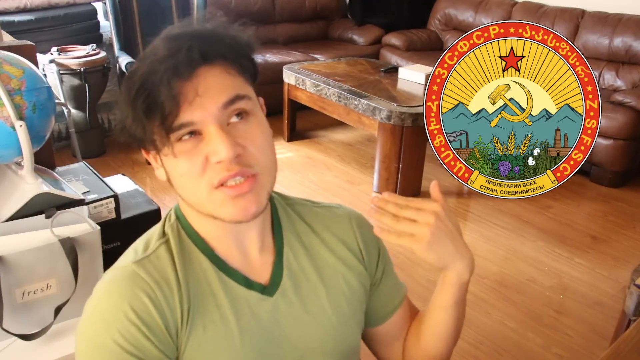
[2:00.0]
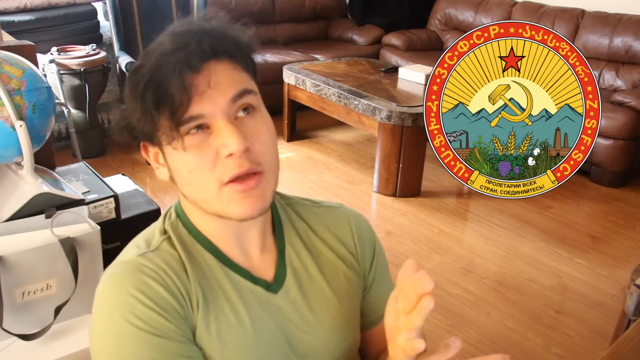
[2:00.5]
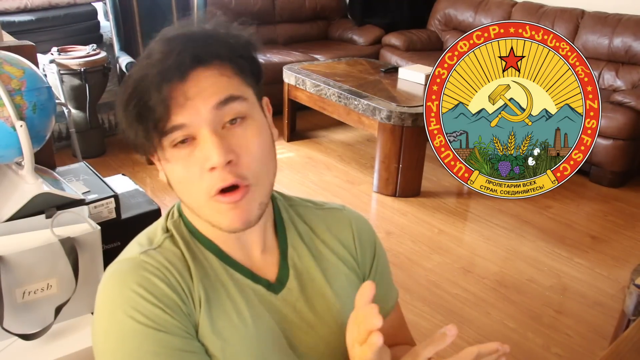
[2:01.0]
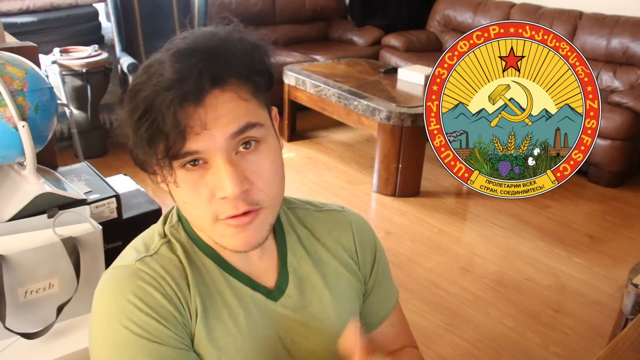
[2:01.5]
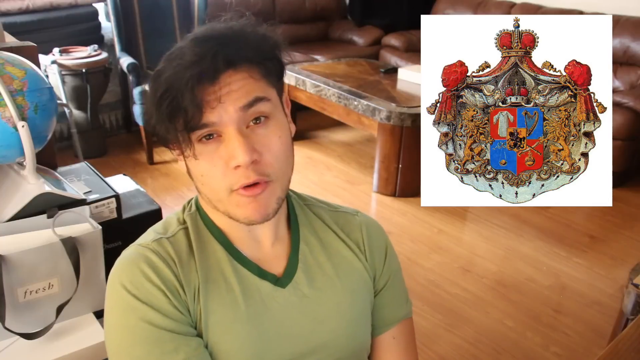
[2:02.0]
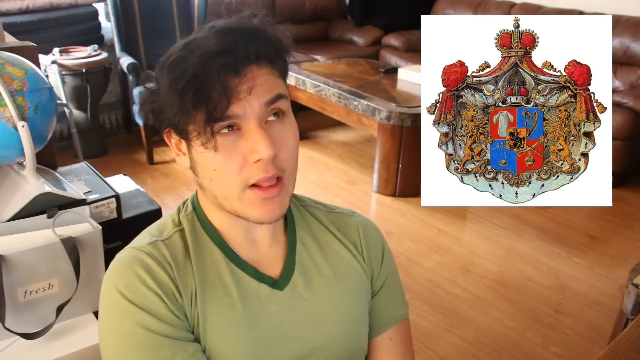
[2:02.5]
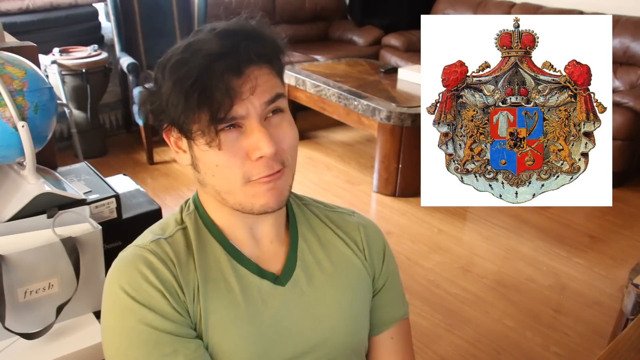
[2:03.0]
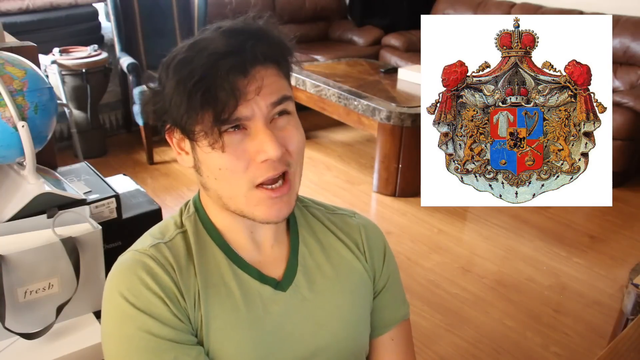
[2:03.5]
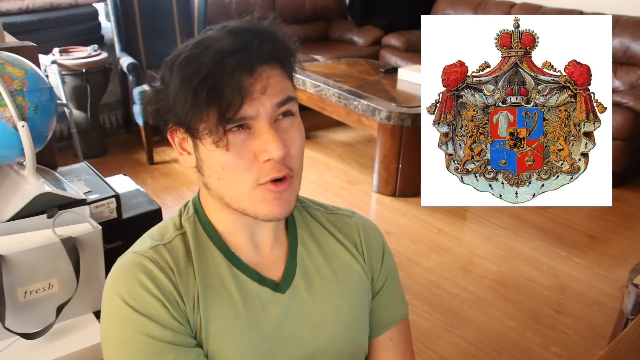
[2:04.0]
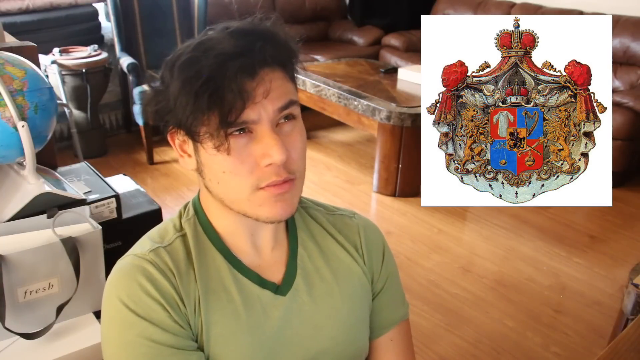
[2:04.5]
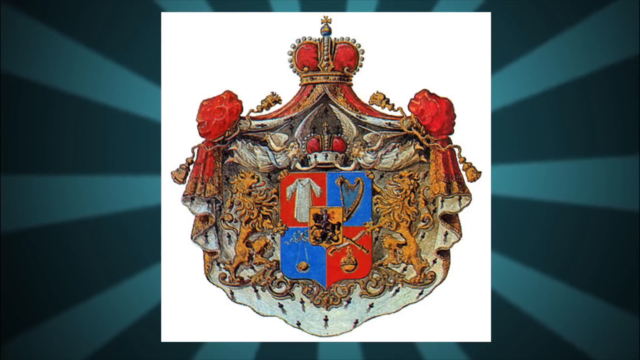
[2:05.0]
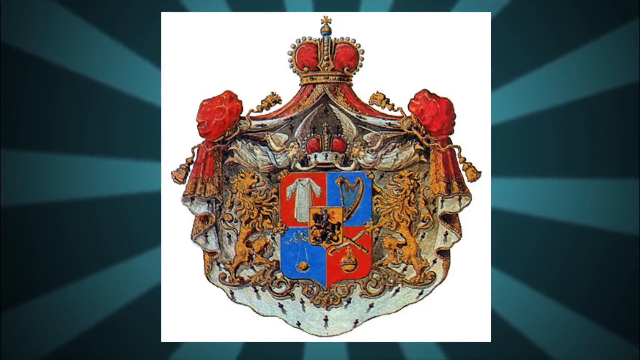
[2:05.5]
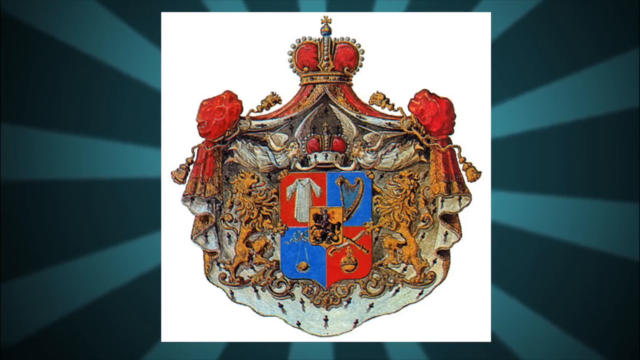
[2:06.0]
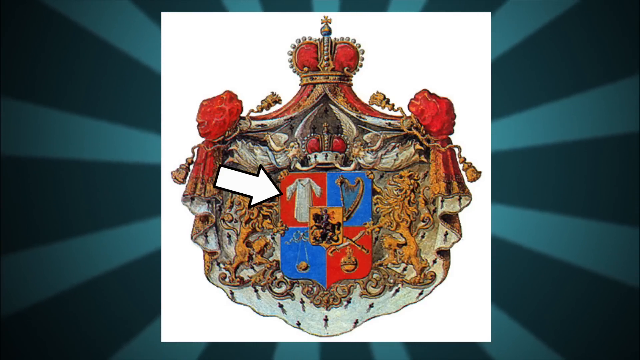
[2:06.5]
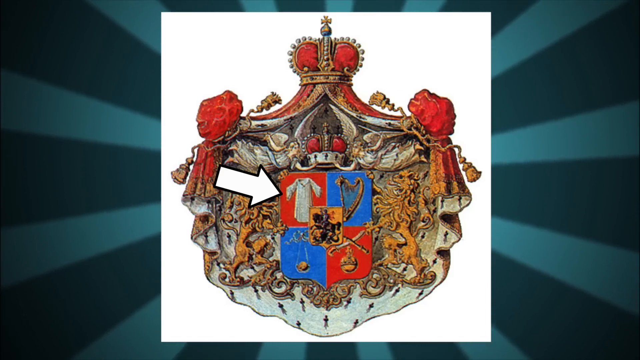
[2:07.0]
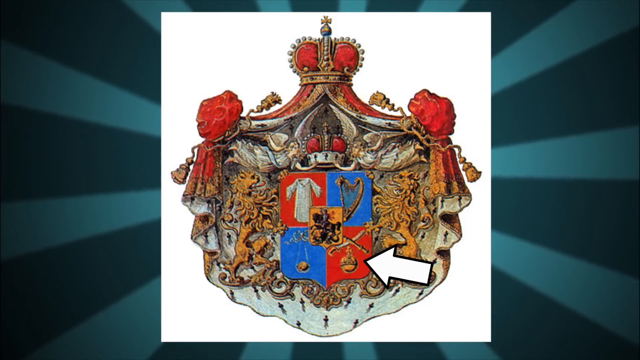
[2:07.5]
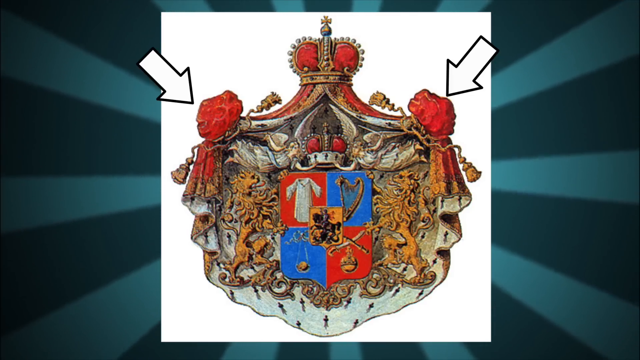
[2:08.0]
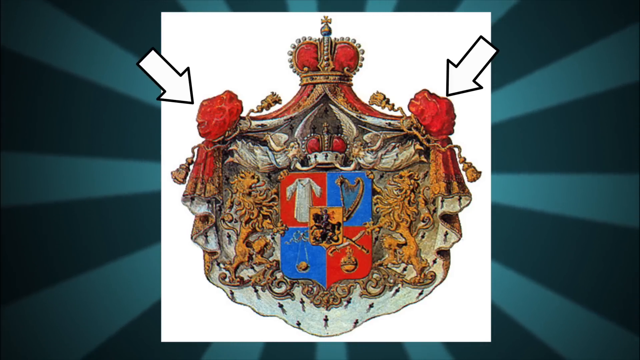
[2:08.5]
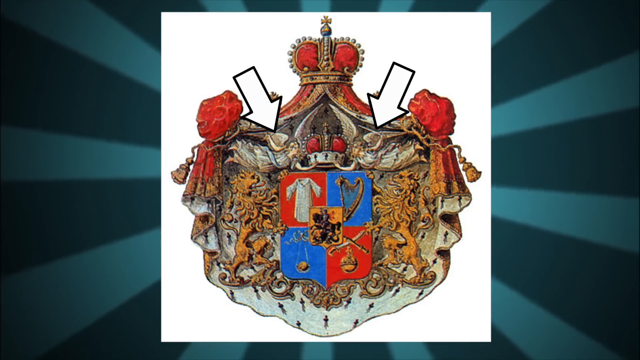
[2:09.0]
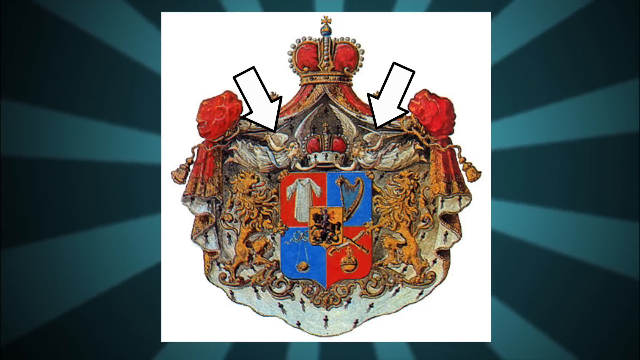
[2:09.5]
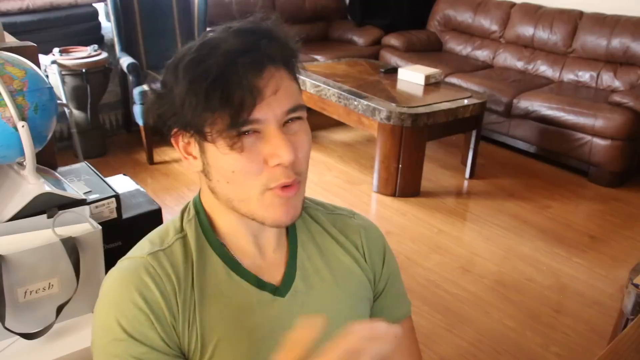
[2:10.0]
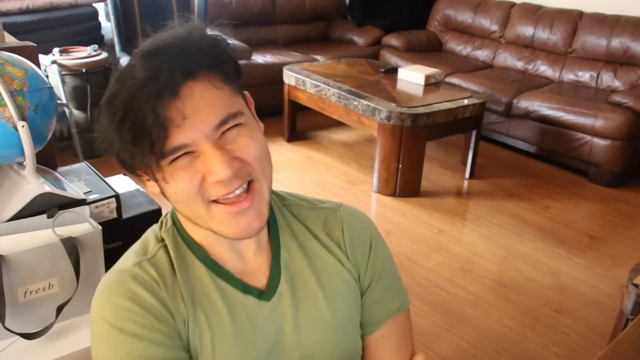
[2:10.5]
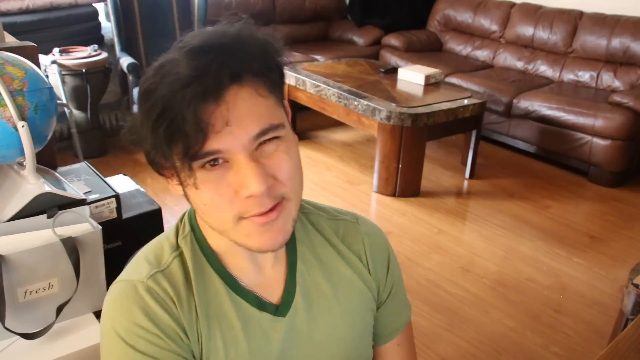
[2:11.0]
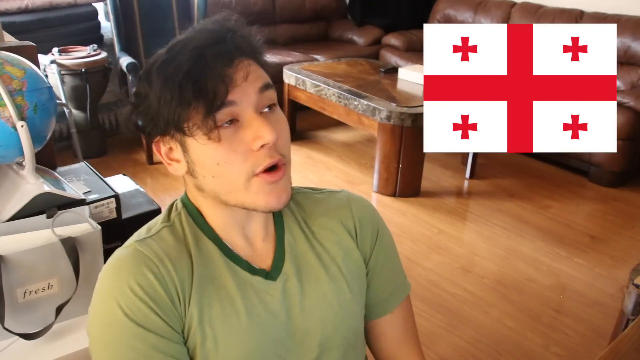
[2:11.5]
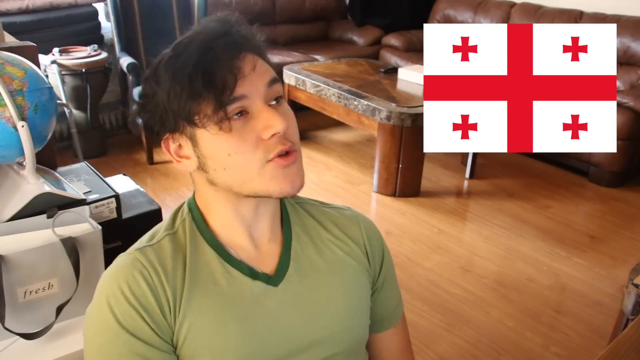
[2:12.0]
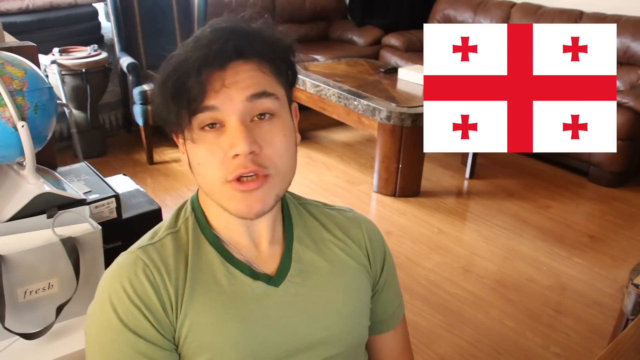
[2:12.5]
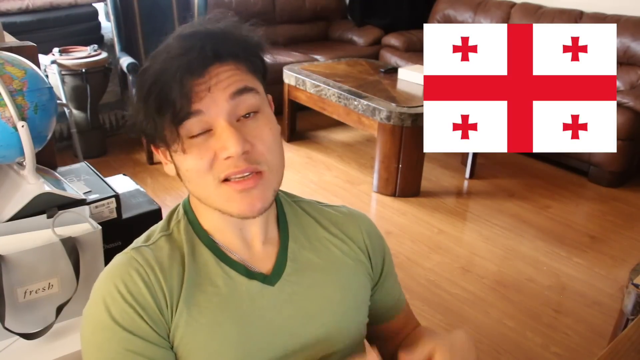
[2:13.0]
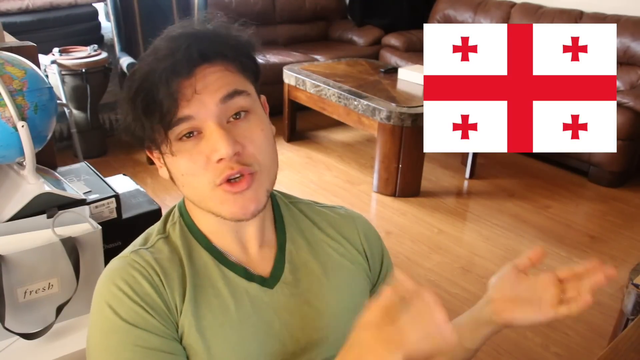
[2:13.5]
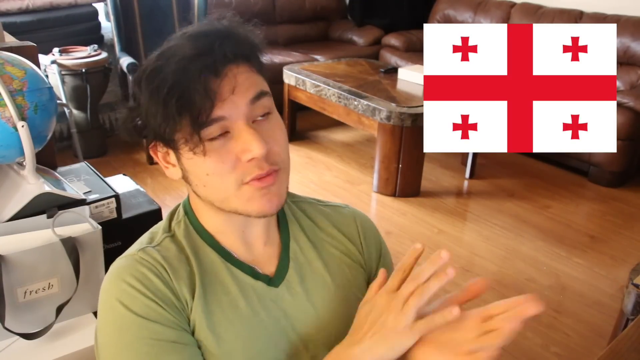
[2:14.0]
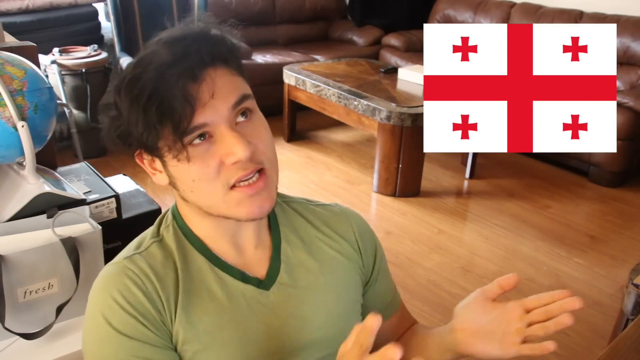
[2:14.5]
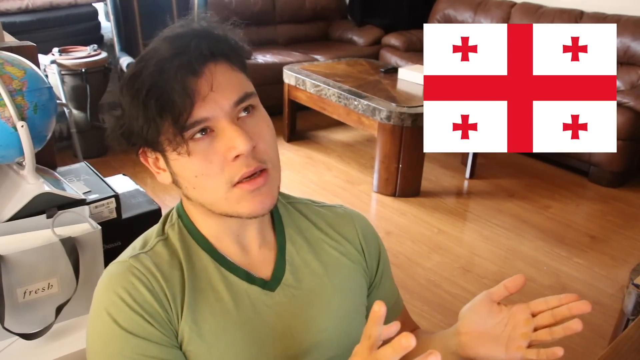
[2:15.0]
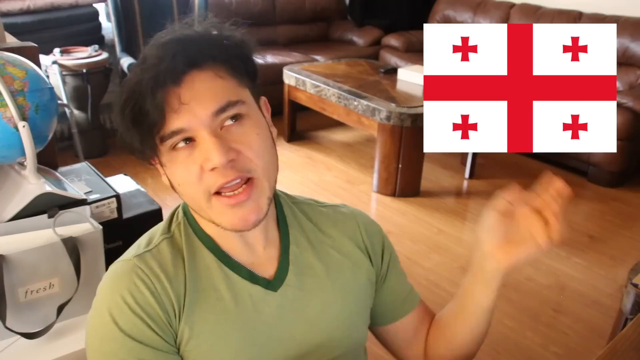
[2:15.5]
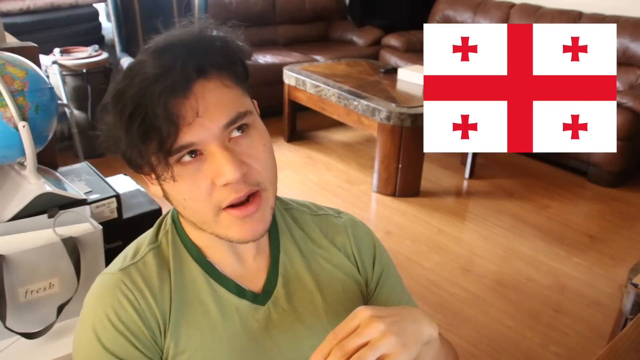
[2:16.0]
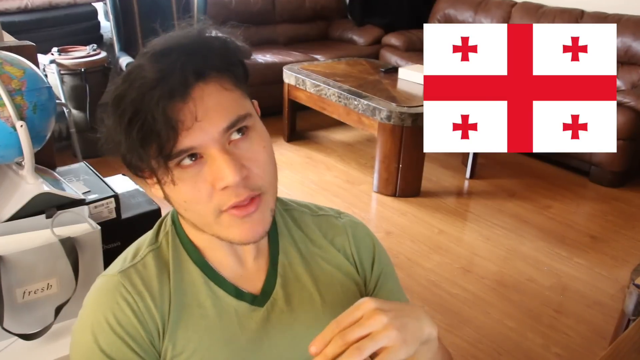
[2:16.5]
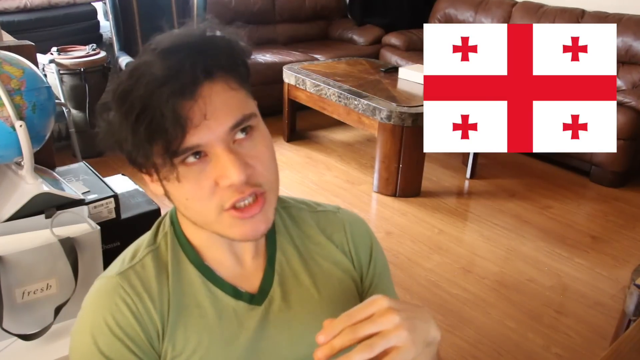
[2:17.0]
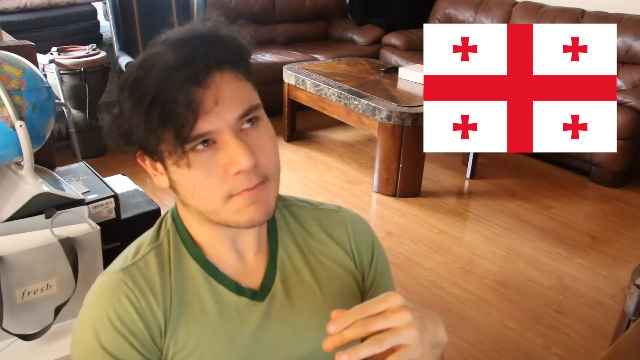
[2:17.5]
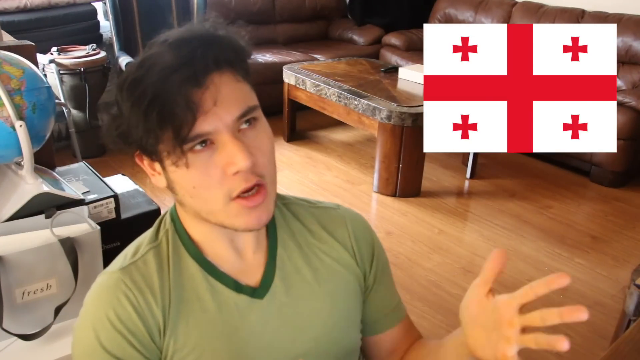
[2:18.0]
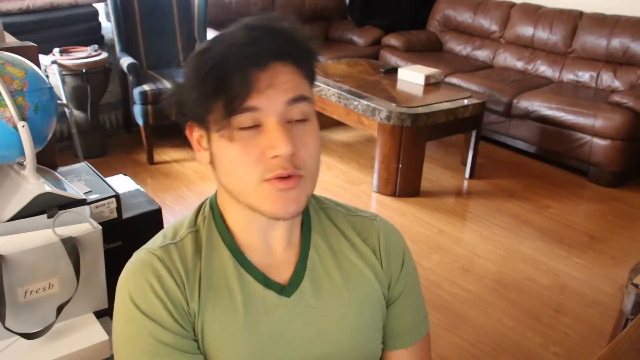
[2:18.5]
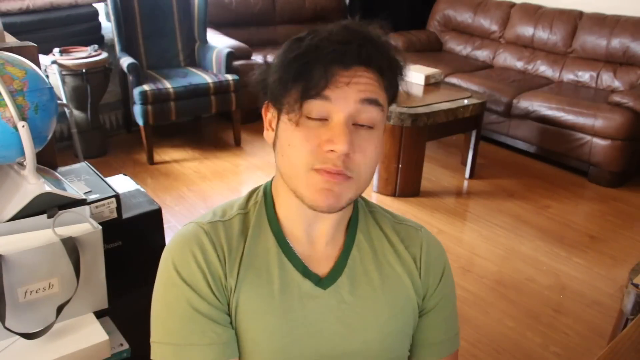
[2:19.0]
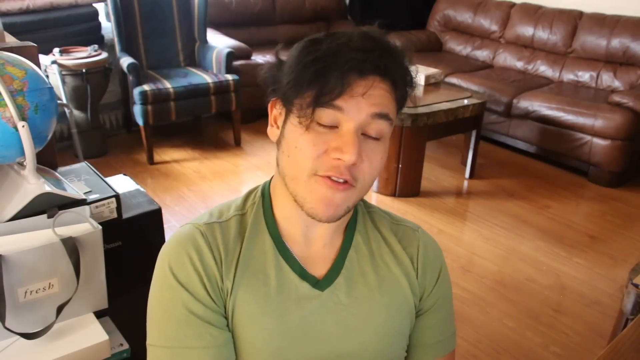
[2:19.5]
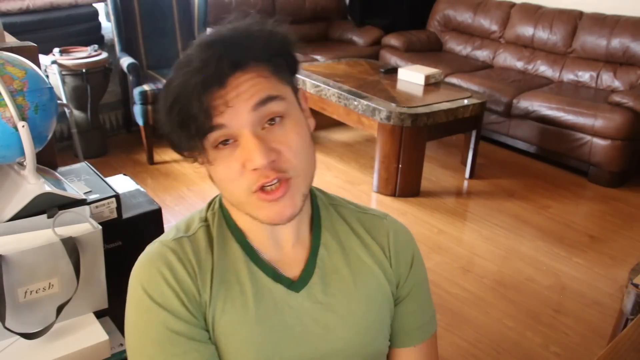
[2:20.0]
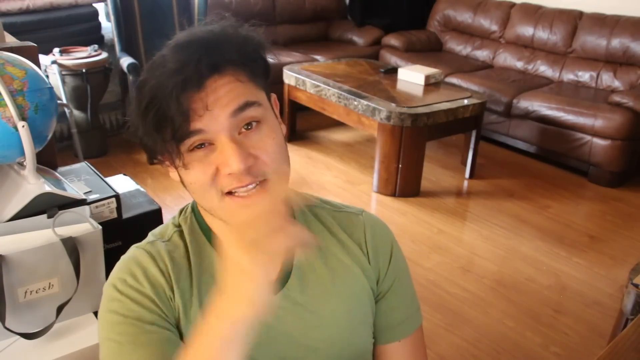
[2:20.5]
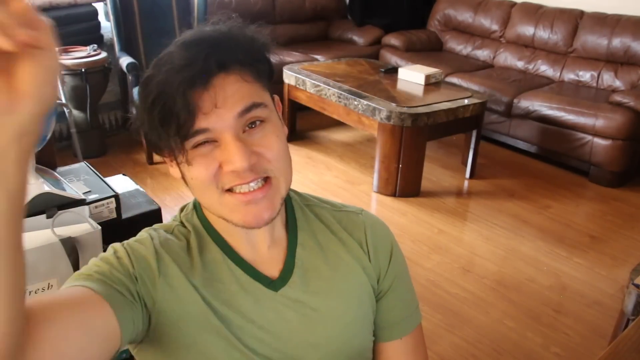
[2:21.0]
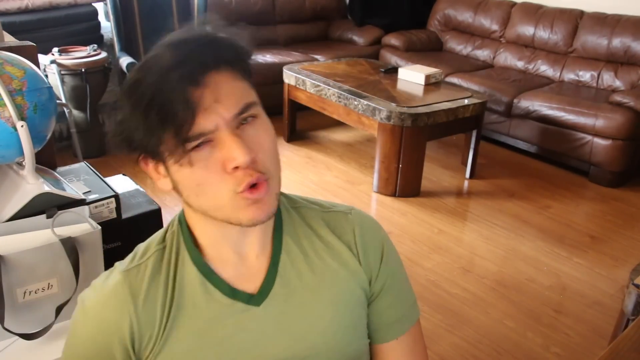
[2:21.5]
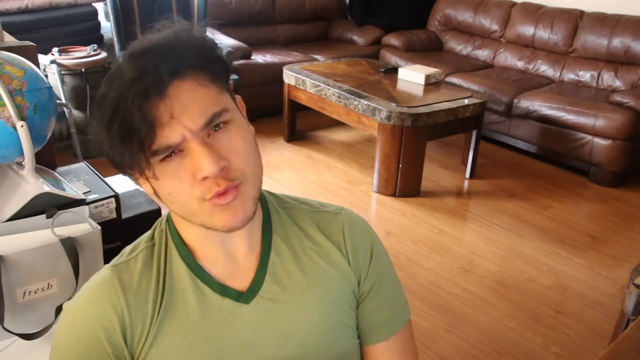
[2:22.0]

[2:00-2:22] The man talks, and on the right is what looks like a symbol with a crown at the top, the symbol with the two lions below that crown, and another crown below it. The symbol is then shown as a big image; the crowns on either side are red with a cross at the top, and an arrow points to other elements of the symbol. The first flag, the one with five crosses, is shown again. The man continues to talk and makes a peace sign, as if signing out at the end of the video.